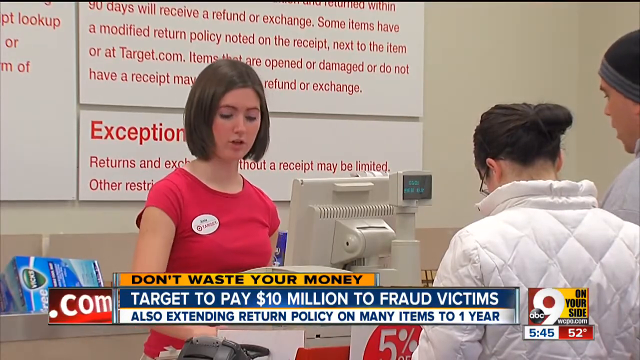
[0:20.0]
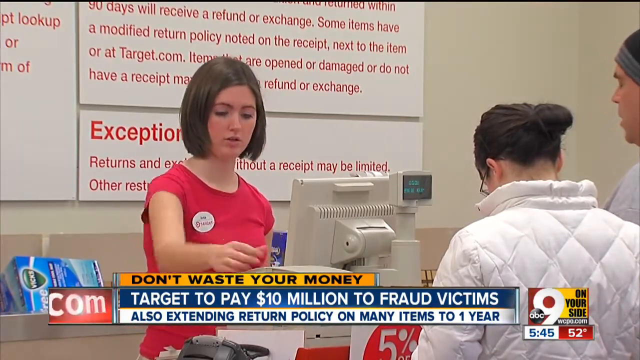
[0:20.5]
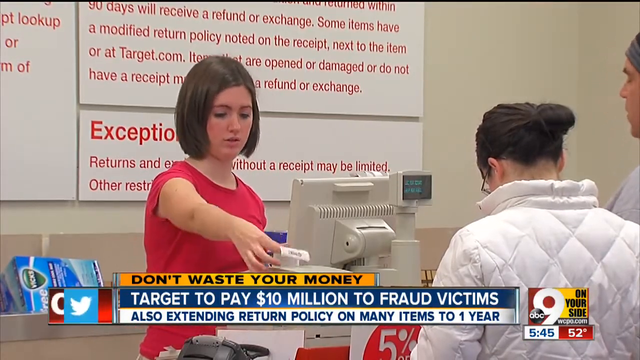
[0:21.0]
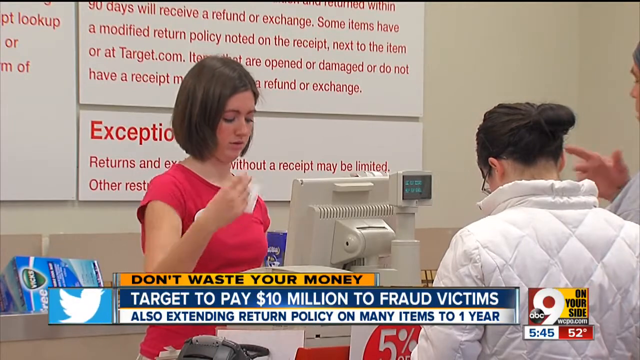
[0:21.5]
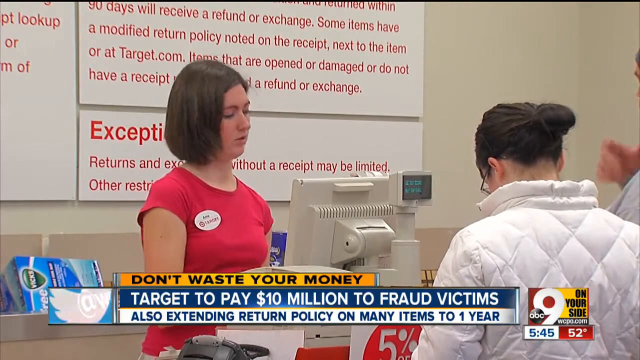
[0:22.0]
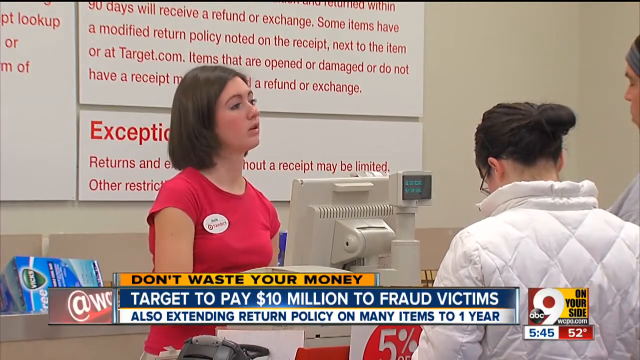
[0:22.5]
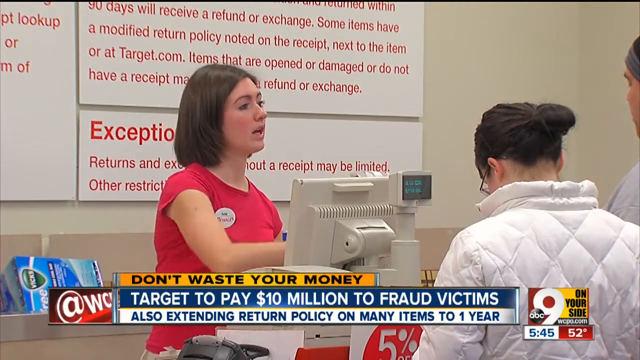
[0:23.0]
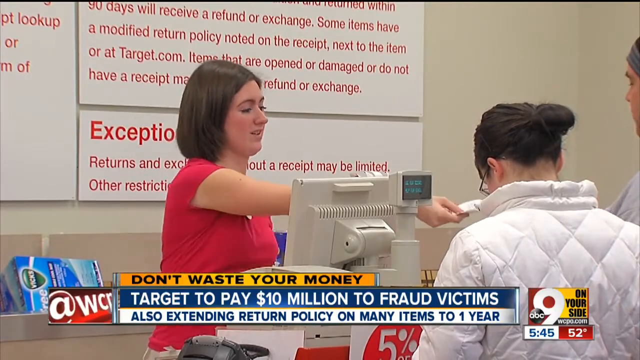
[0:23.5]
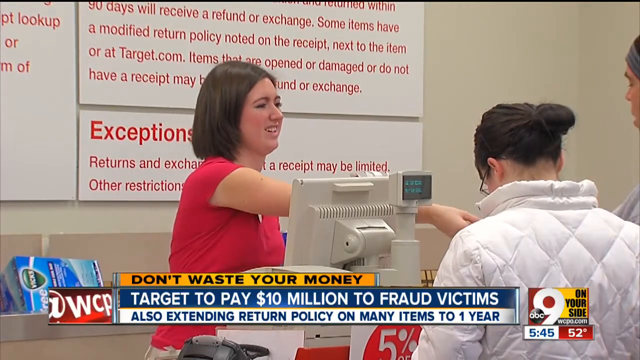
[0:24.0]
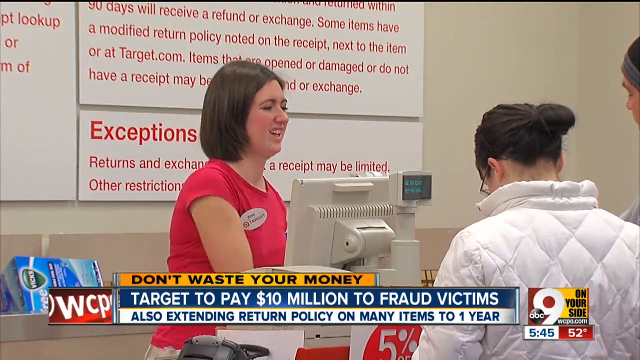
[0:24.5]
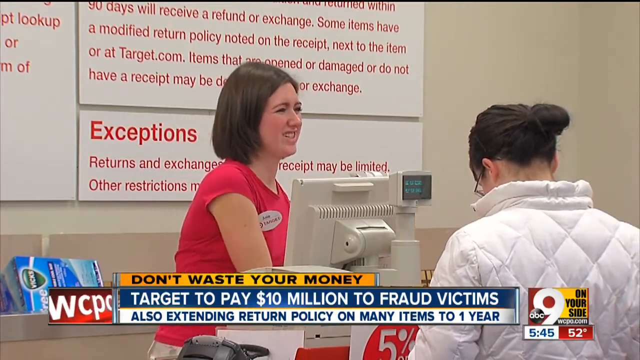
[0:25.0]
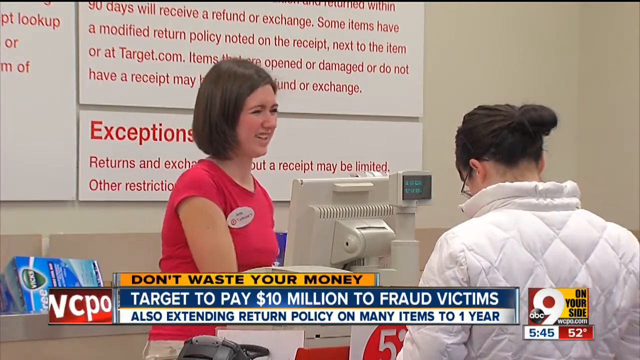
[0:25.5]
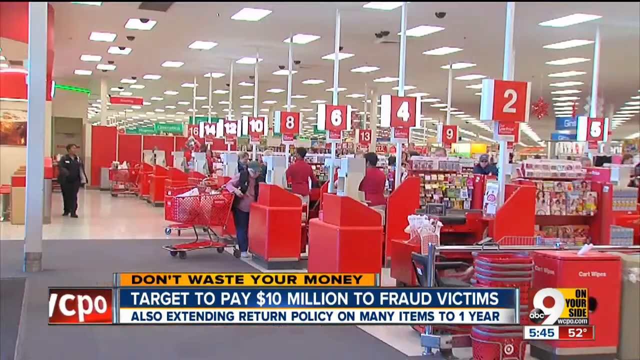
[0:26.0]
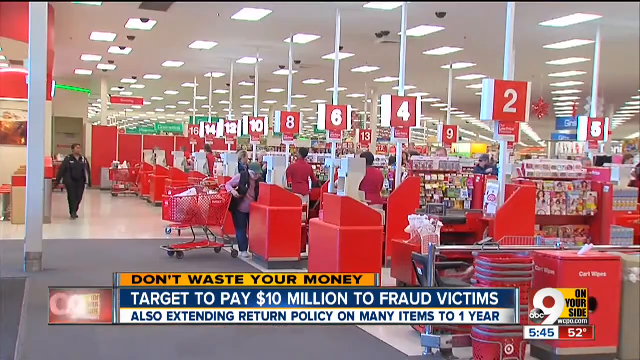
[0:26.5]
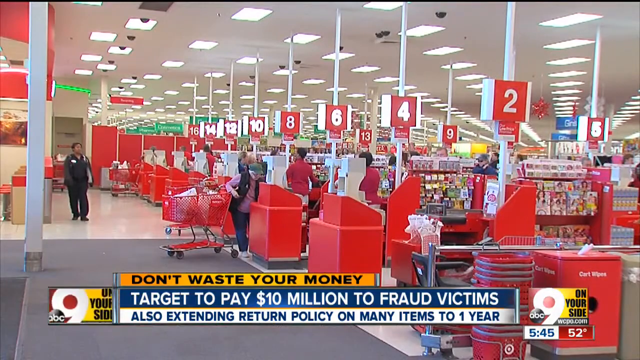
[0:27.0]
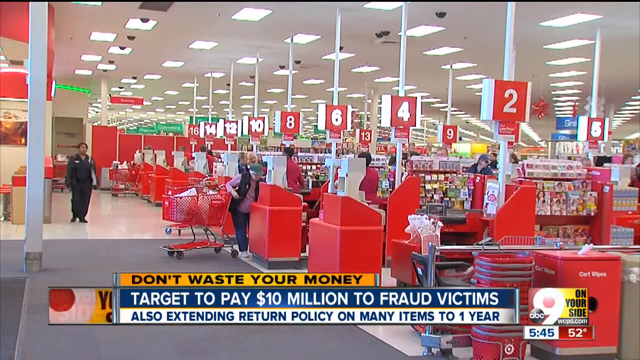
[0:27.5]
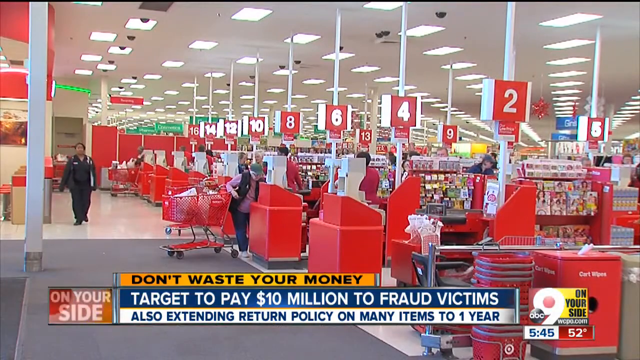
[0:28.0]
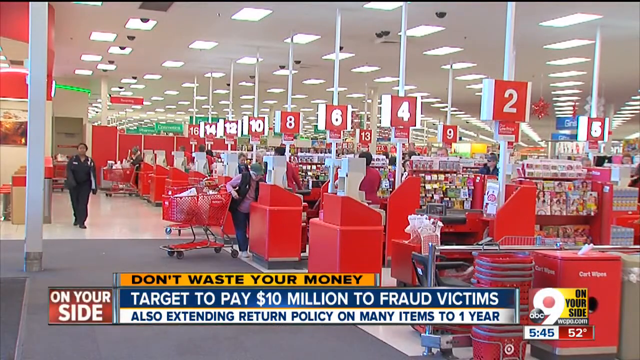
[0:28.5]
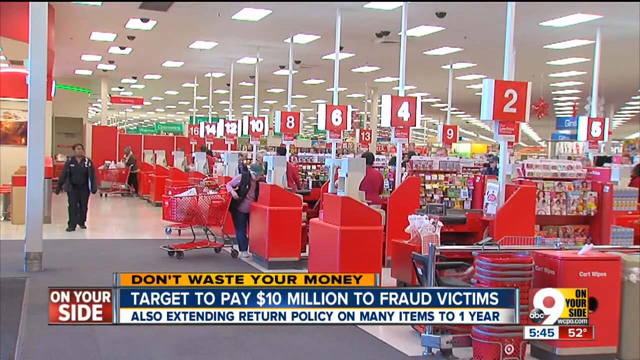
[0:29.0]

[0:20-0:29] A Target employee on the left side takes a receipt out of the machine with her right hand, then looks to the right while the customer is talking at the far right. The employee hands the receipt to the customer with her right hand and interacts with the customer, talking to them. The scene changes to the checkout lines of the Target store: a long row of checkout lines numbered 2 to 16. A person dressed all in black walks on the left side toward the camera.